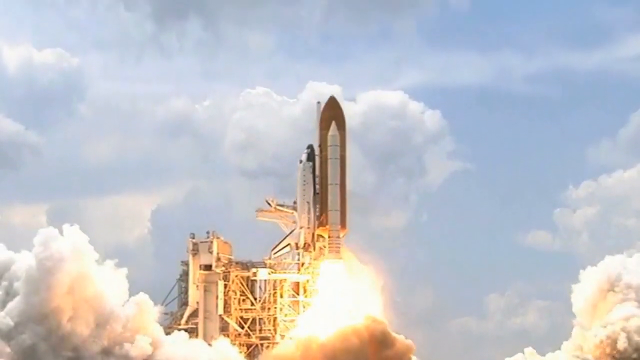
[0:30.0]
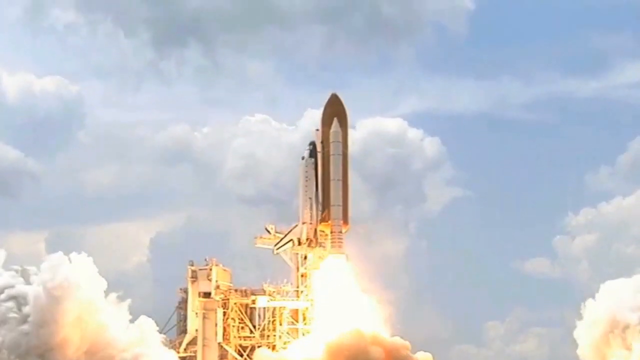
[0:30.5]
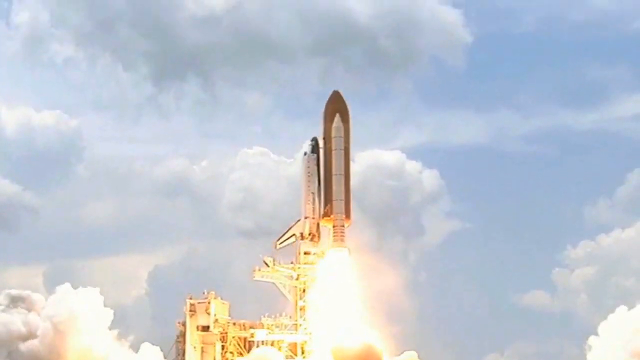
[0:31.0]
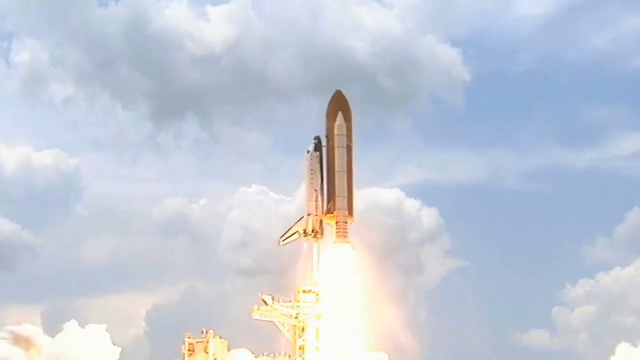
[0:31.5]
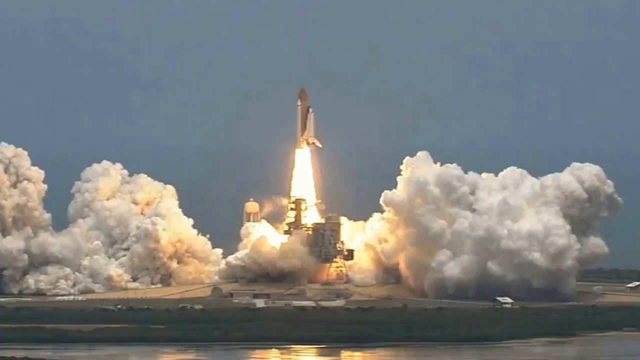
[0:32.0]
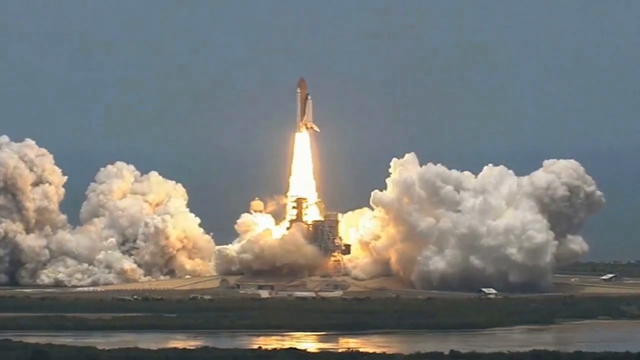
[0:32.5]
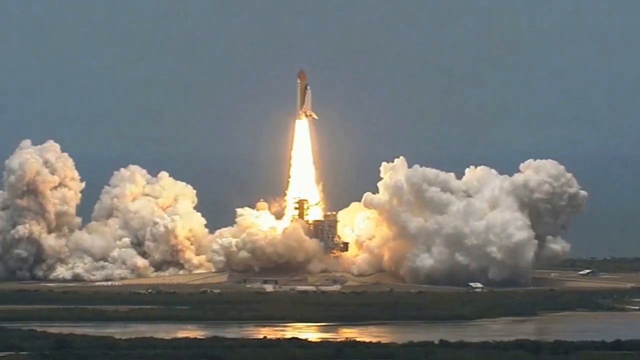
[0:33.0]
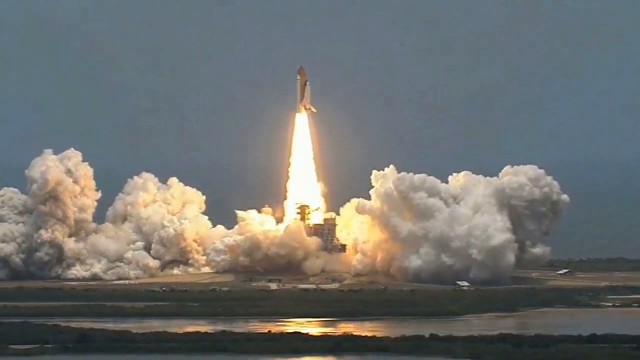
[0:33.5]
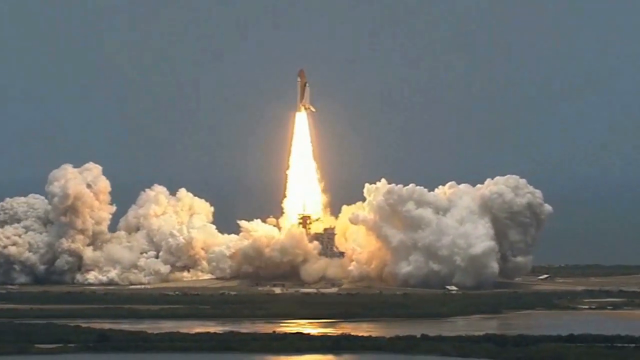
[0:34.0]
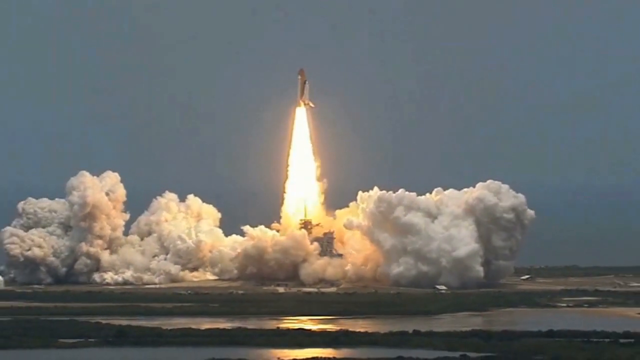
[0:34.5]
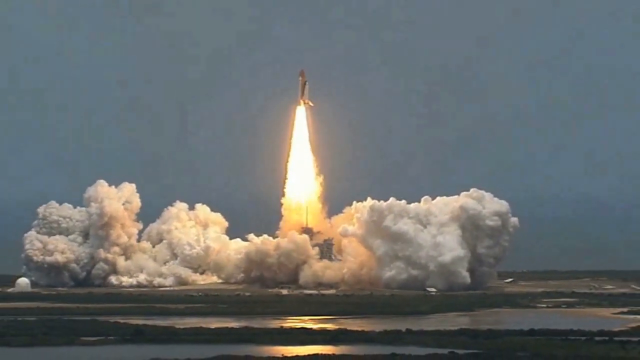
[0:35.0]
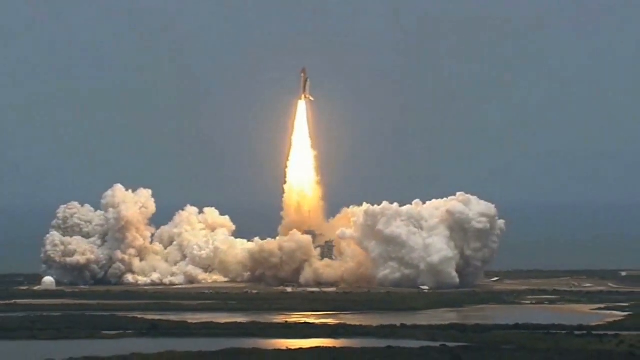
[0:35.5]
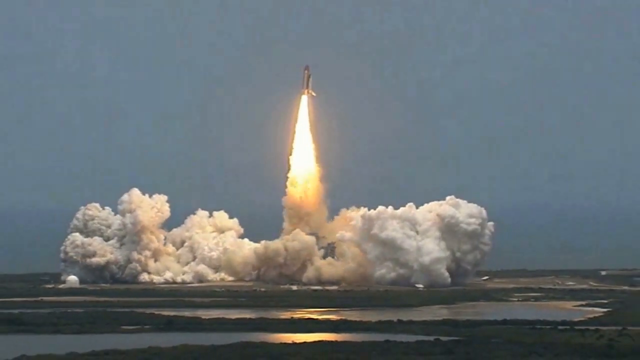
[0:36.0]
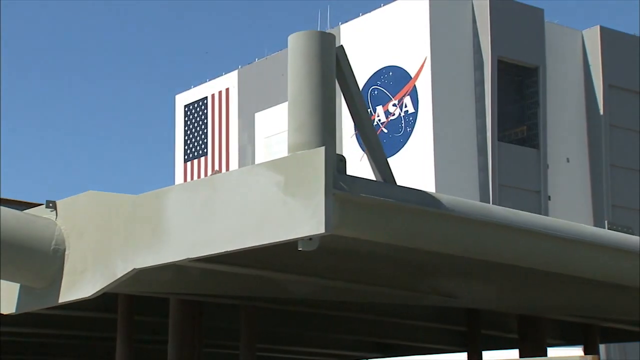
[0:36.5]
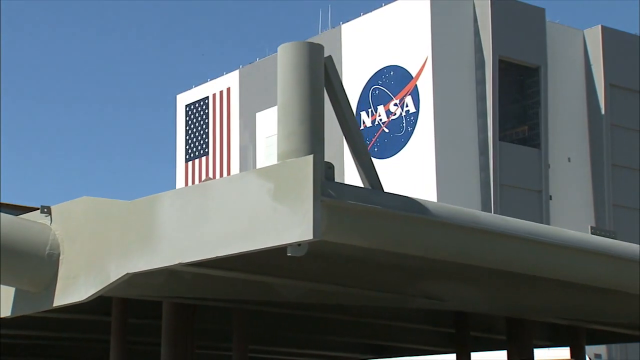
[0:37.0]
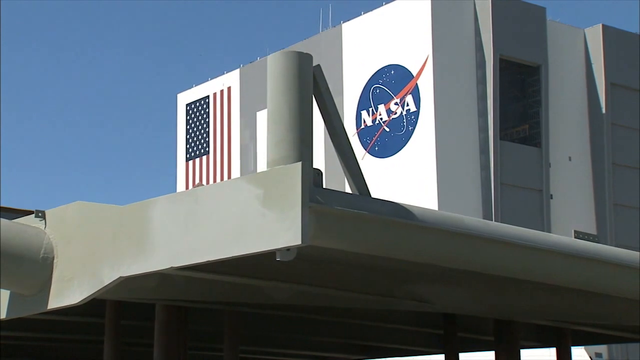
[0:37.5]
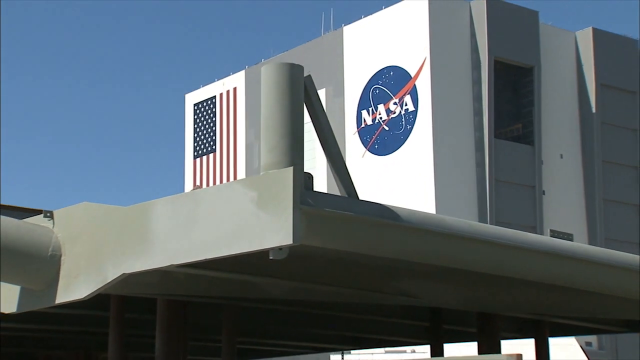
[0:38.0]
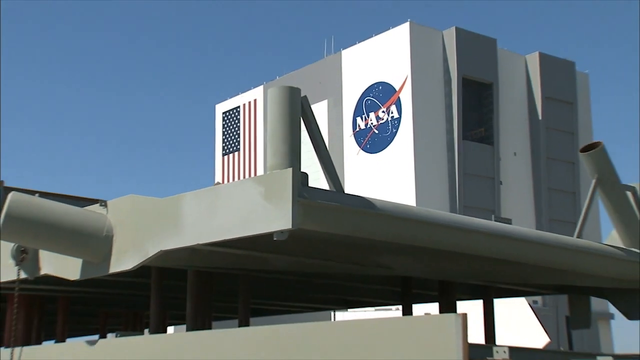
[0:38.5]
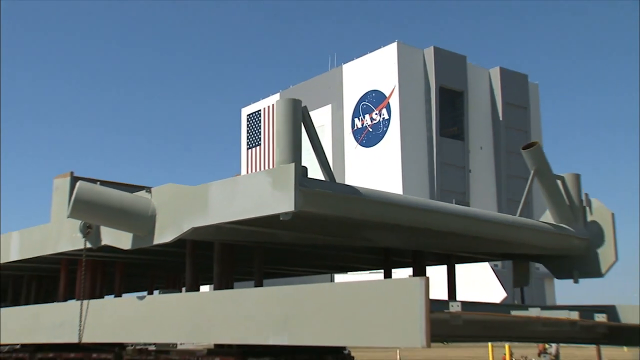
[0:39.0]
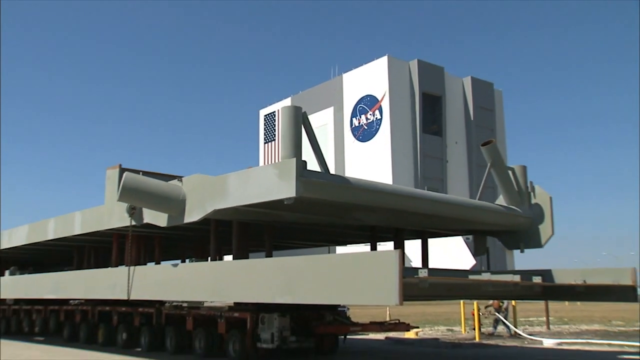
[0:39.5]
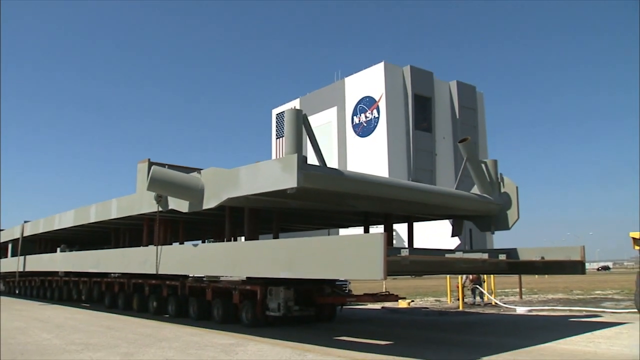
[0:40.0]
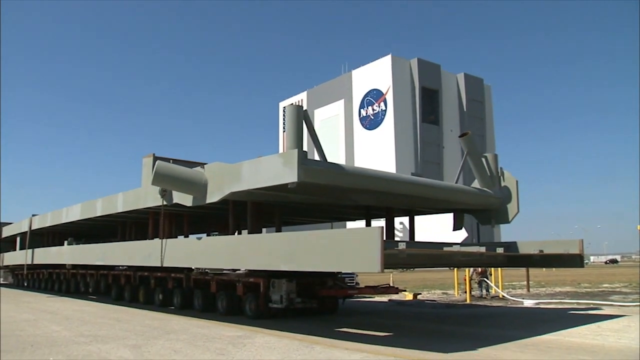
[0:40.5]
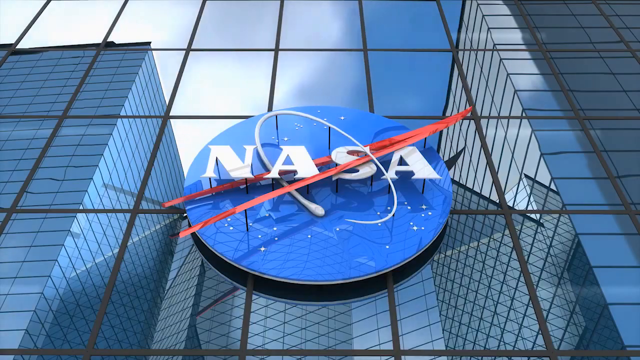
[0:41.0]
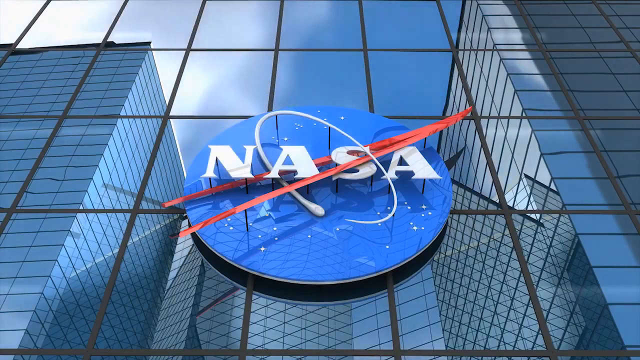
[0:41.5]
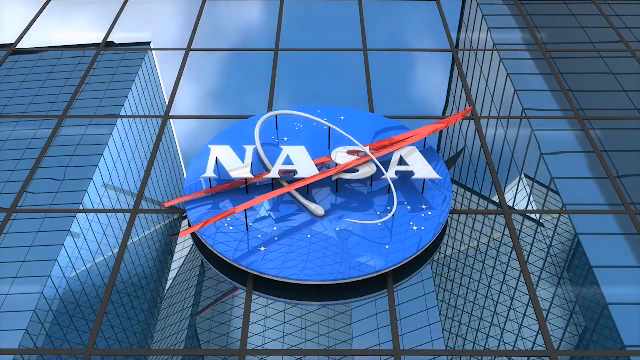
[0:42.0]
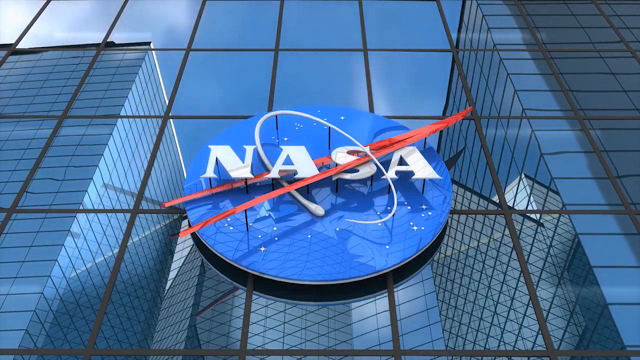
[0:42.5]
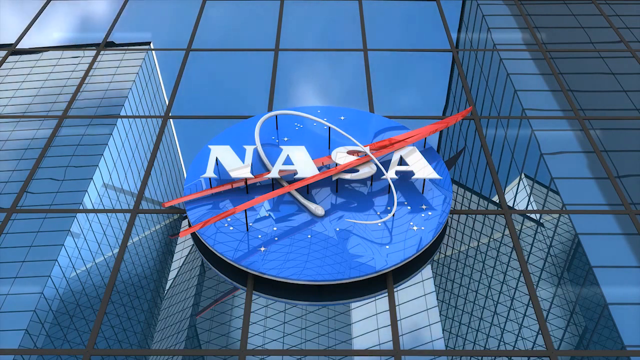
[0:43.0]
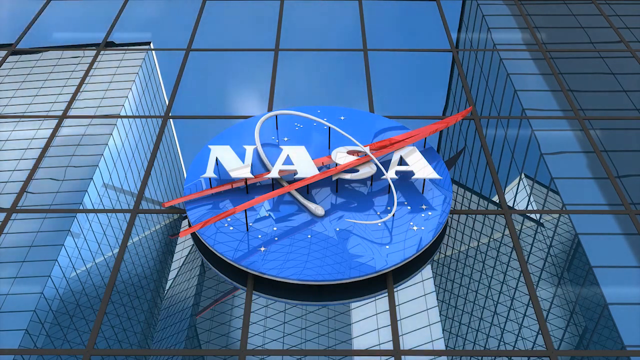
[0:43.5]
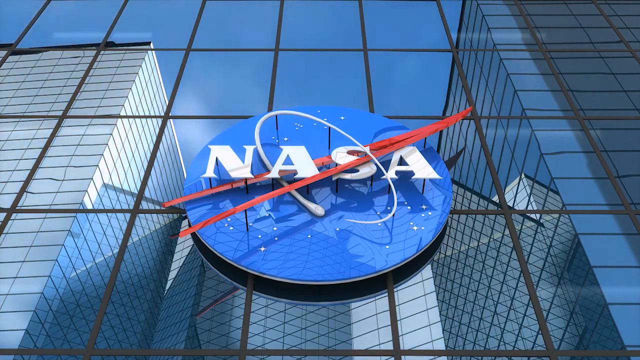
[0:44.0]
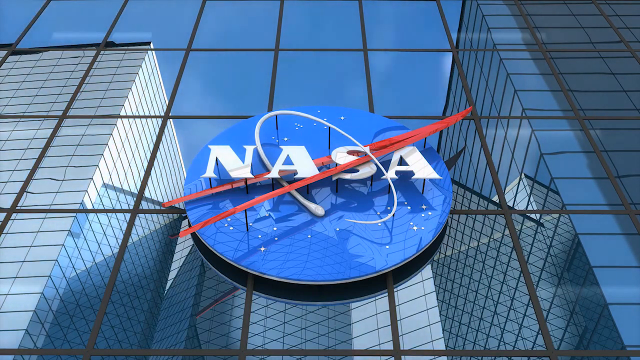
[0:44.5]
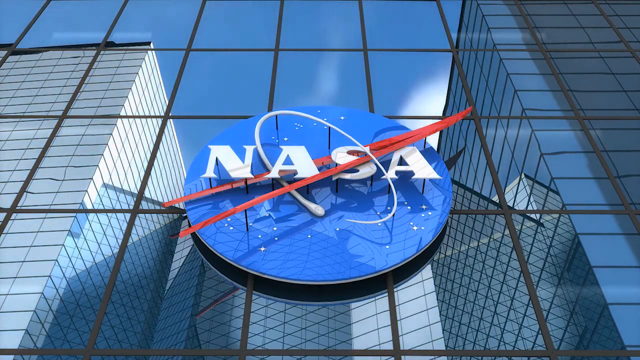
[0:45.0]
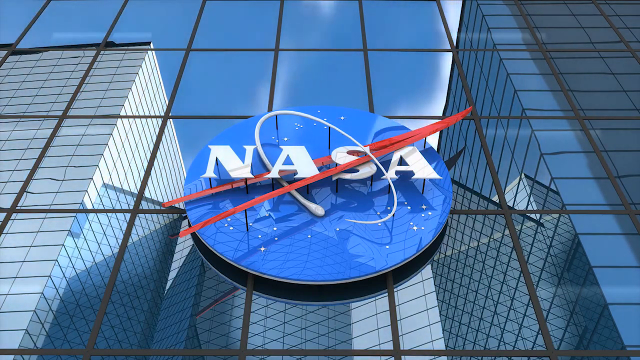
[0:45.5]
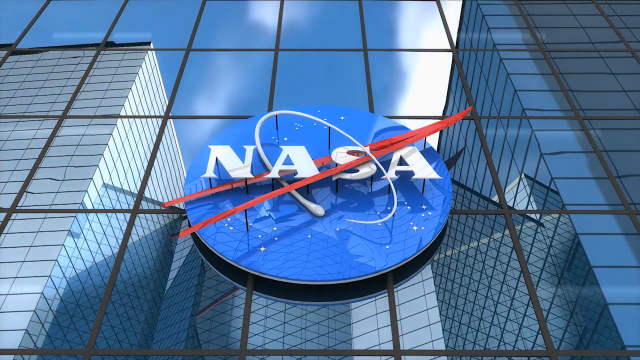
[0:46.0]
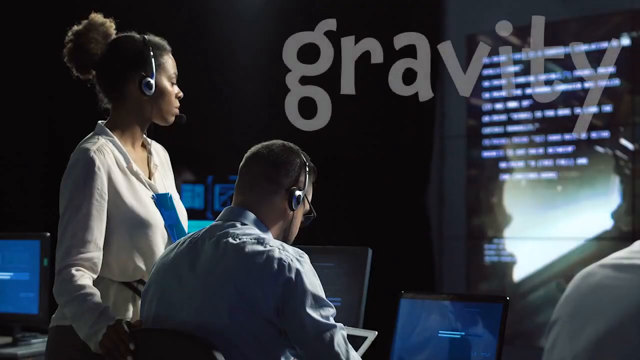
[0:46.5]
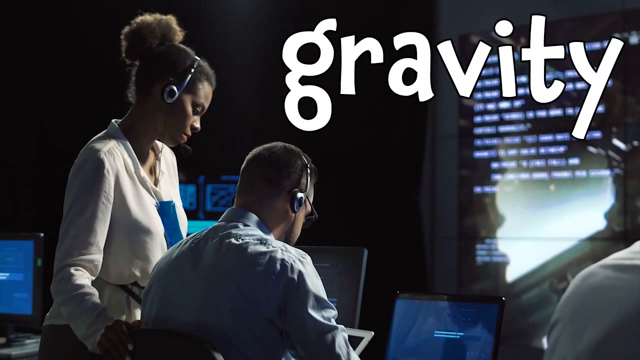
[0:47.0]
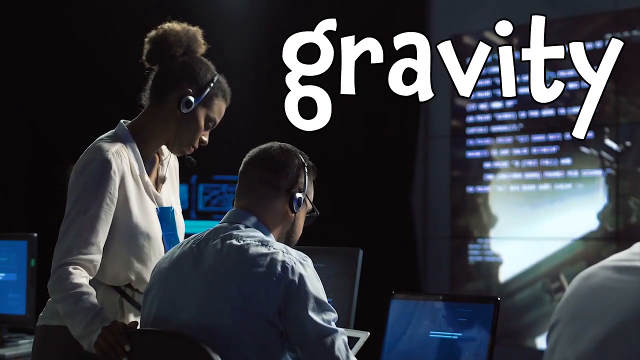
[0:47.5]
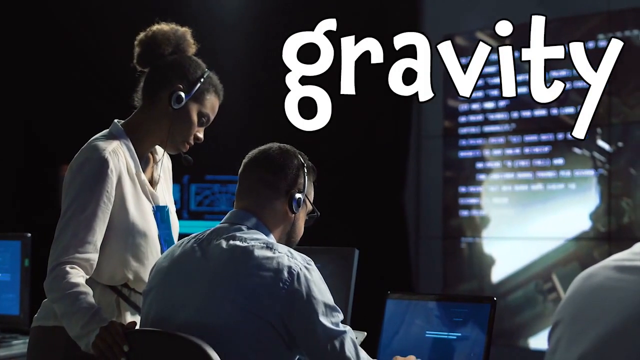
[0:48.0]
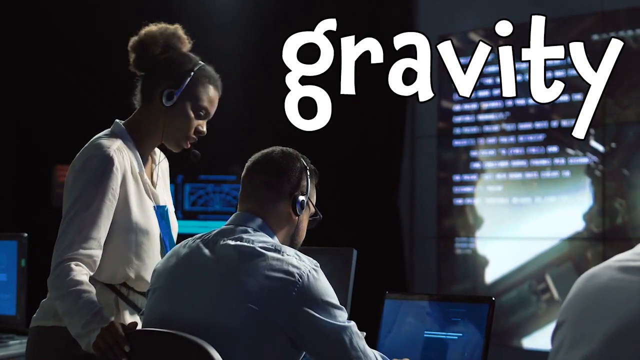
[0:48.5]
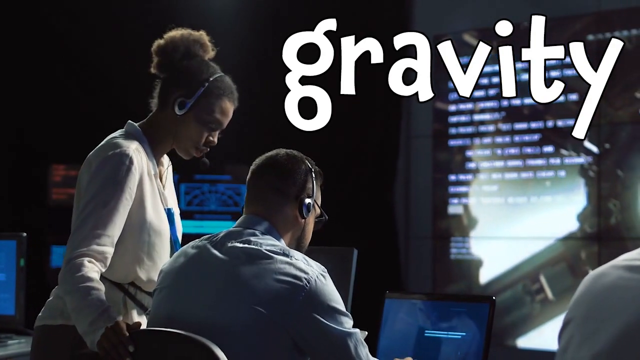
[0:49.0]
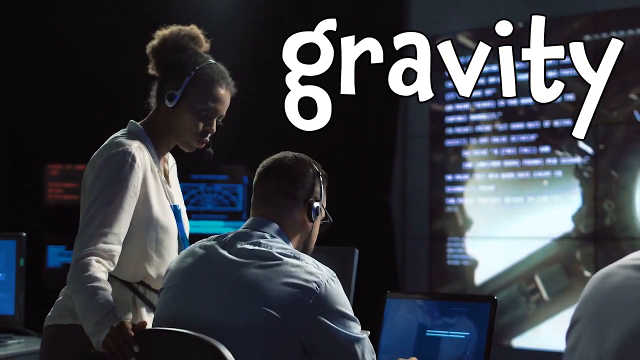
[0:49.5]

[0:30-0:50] A spaceship launches into the air, and the view zooms out to show clouds of smoke nearby. Outside the NASA building there is a giant flat structure that is quite low and very long; it looks like a flatbed and might be used to carry something. The NASA headquarters is shown with the NASA logo on the building, followed by animation of clouds and the reflection of the building. The view pans to two workers inside the building, both wearing headphones and looking down toward a computer or something. The two seem to be brown or African-American individuals: a woman standing and a man sitting in a dress shirt. Text reading "gravity" appears in a large white, kind of cartoonish kid's font.